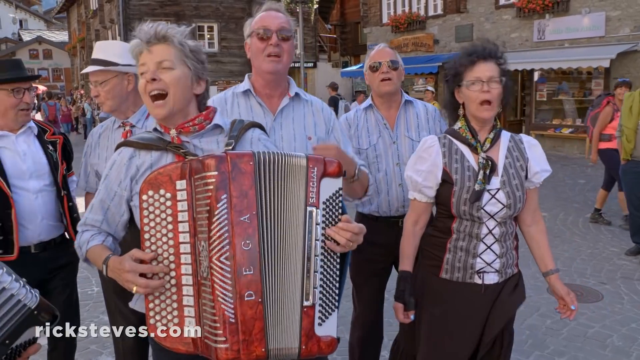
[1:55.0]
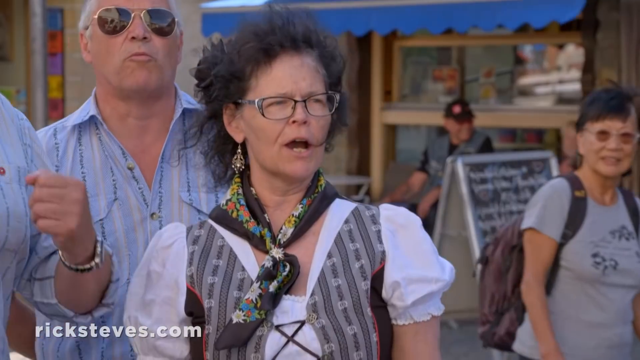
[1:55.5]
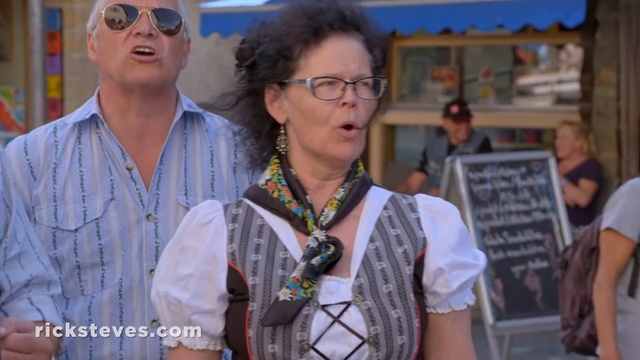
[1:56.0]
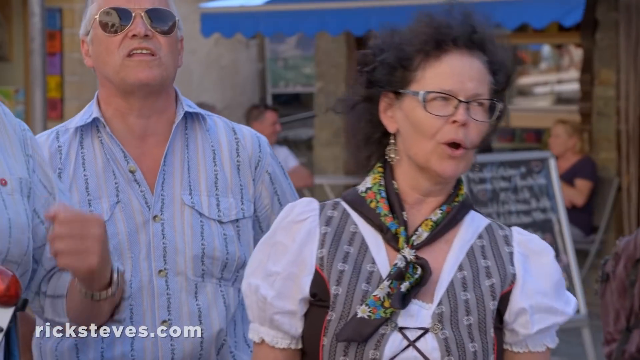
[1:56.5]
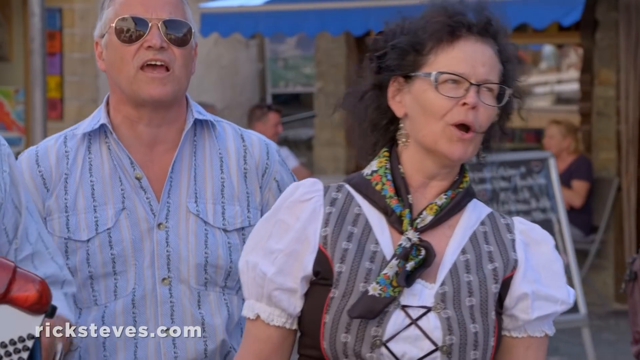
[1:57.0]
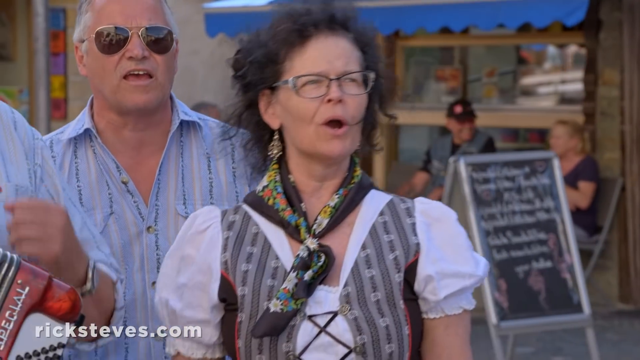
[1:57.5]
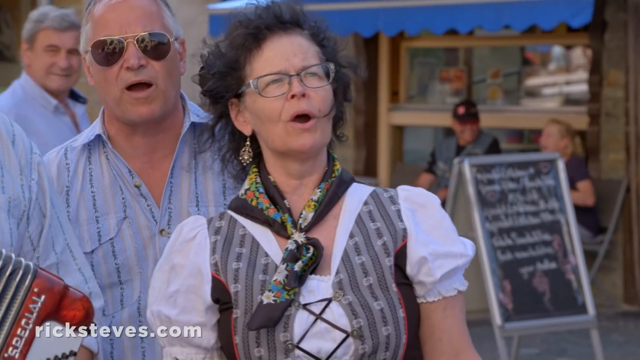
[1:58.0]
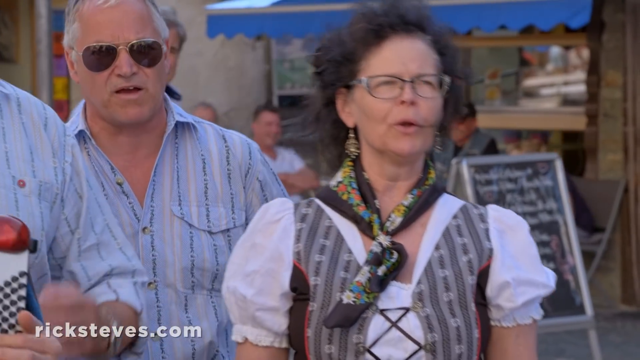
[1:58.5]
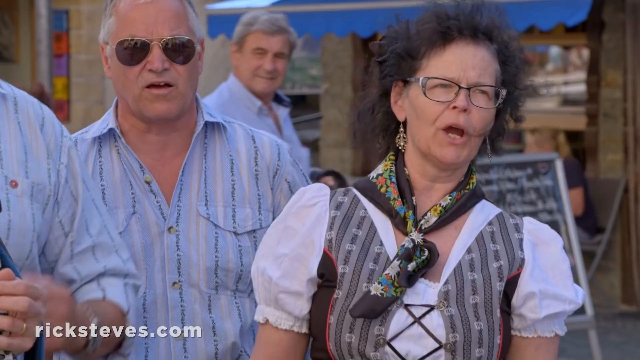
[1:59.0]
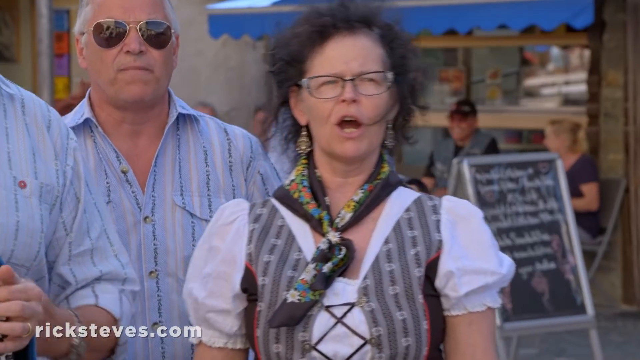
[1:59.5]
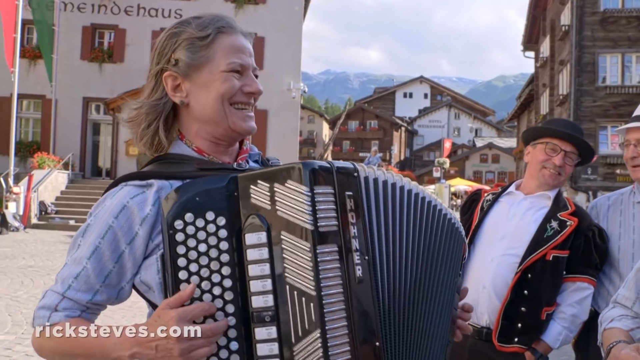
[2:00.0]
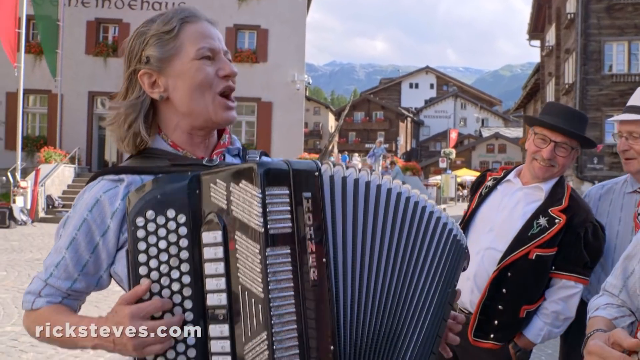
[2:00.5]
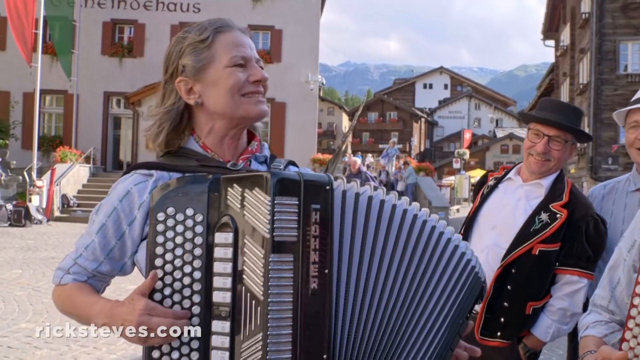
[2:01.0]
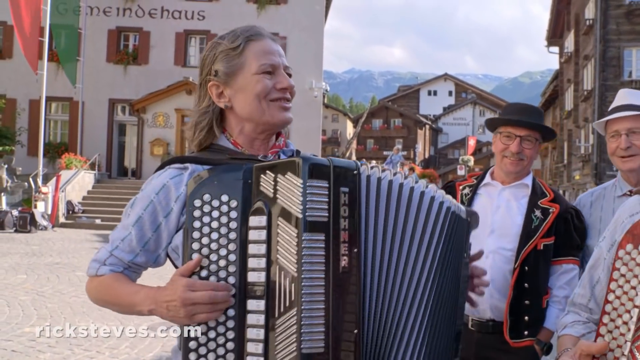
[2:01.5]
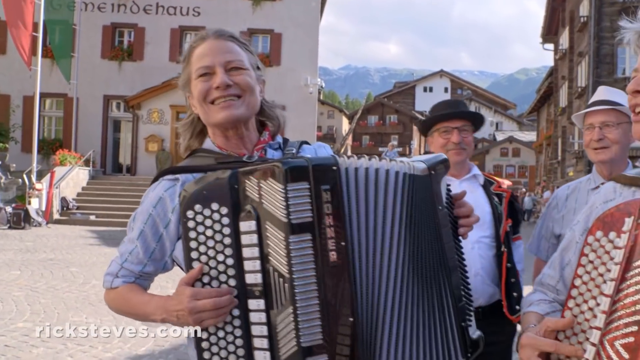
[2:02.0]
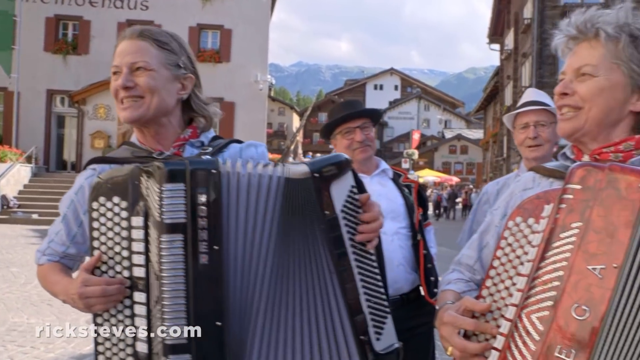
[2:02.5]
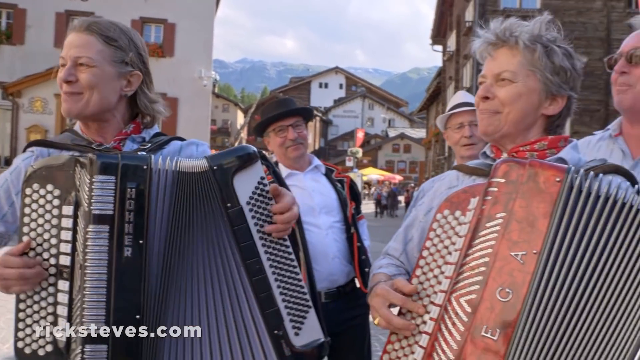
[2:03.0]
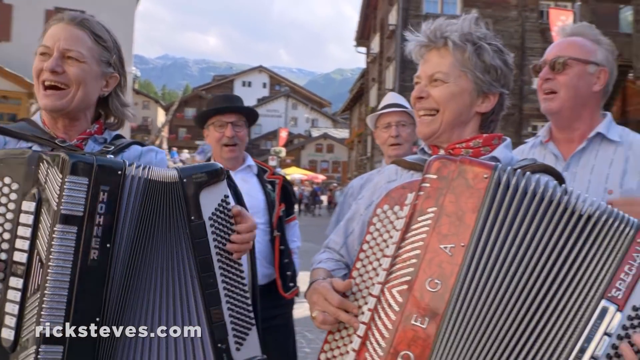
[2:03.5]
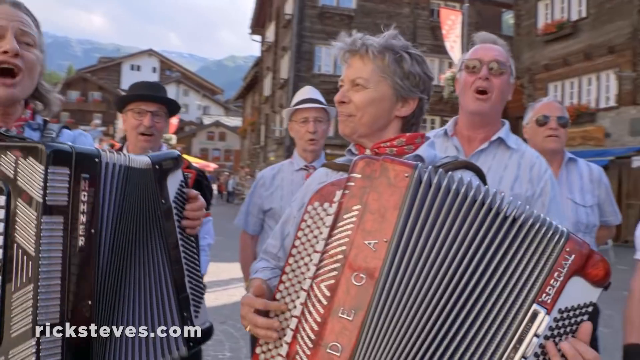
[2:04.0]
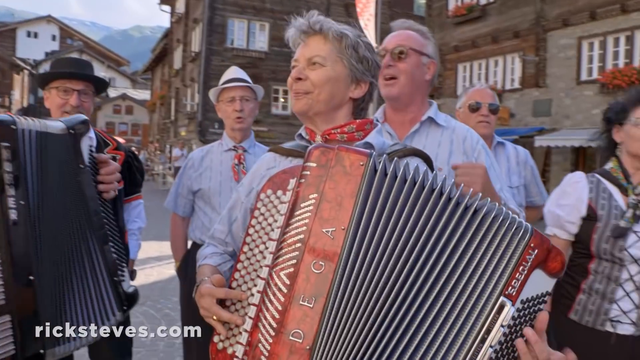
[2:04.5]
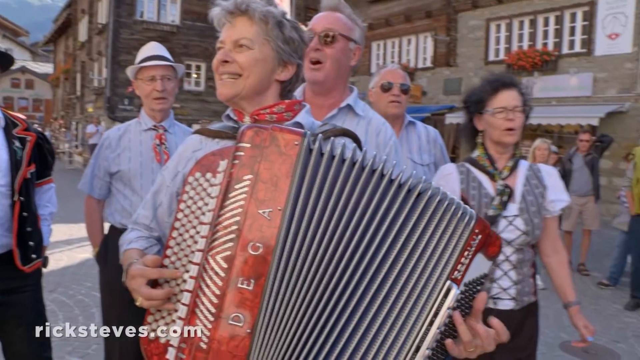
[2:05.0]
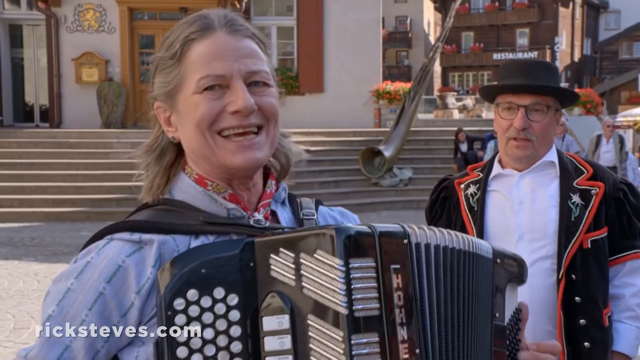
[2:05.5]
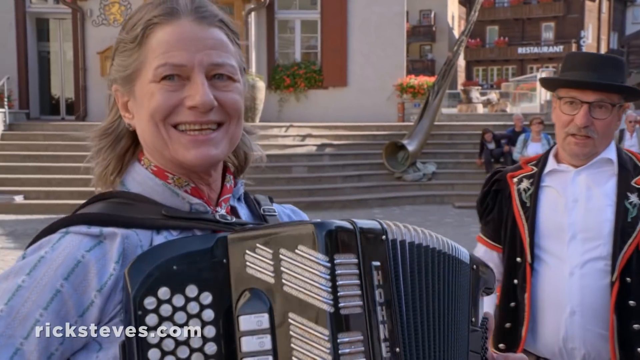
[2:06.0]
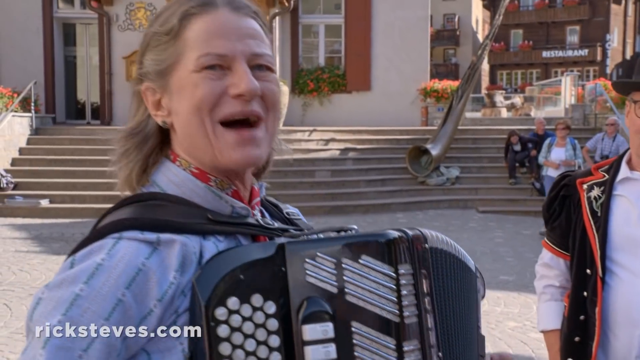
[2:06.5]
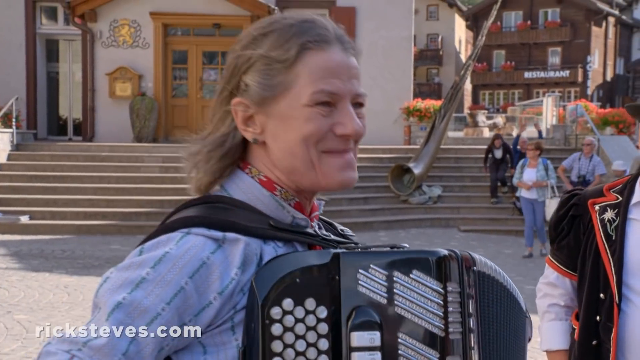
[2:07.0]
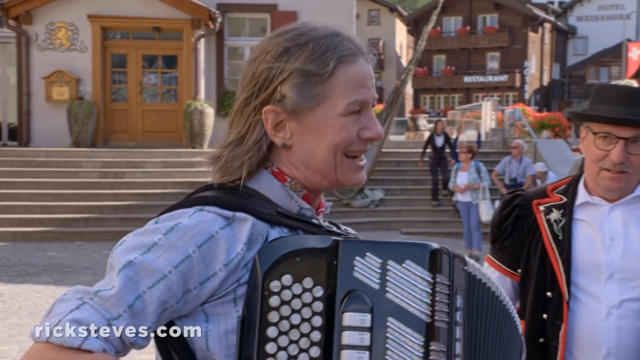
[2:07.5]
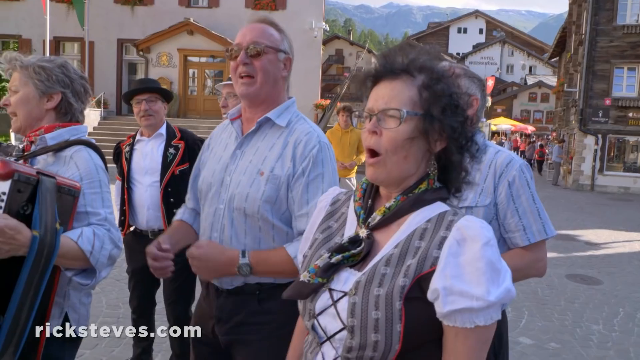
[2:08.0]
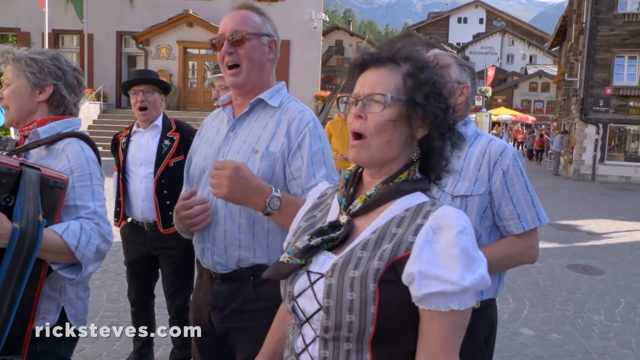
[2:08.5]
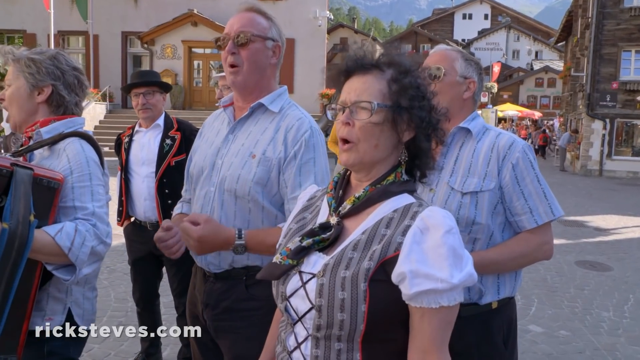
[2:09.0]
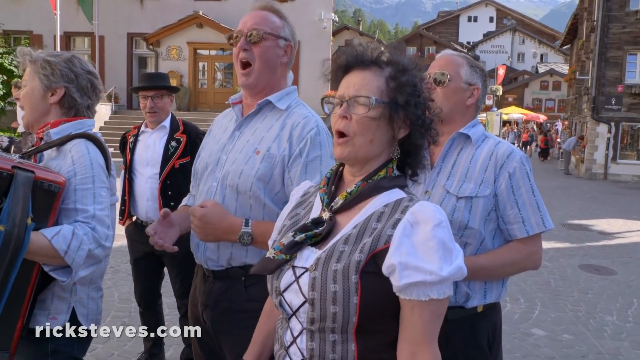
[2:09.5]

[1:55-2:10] The video is about Zermatt, Switzerland, finding charm in the Swiss Alps. The musicians perform, with two women in front playing accordions, one black and one red. A woman with a scarf around her neck sways back and forth and sings. The view goes to the woman playing the black accordion, who is singing, and then to a man in the back wearing a traditional-type jacket and a hat. They dance and sing along to the accordion music. In the back there looks to be a restaurant, possibly a bakery, with a couple of people sitting on white chairs, buildings in the background, and a chalkboard outside advertising what they have. People sit on steps behind the singers watching the show. The group members somewhat sway back and forth or dance as they sing, in the middle of the street in the middle of the day.